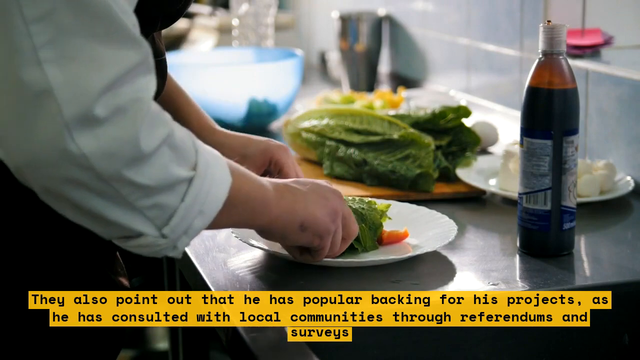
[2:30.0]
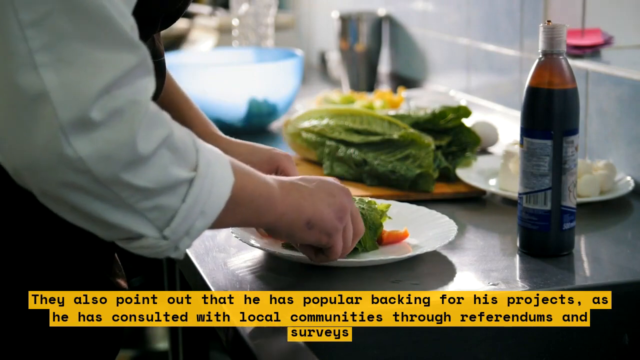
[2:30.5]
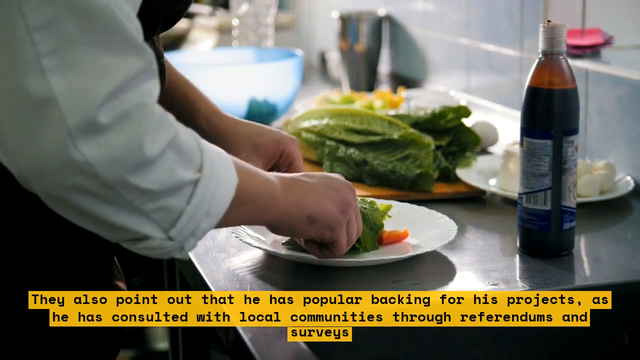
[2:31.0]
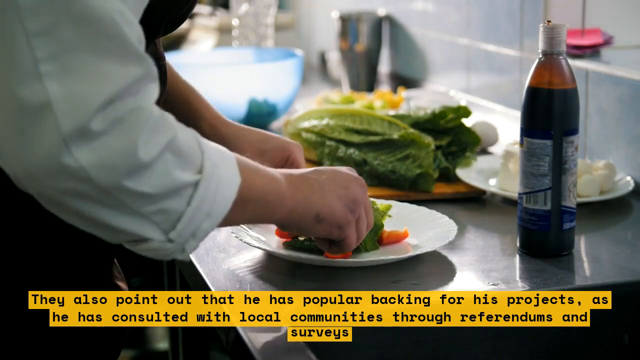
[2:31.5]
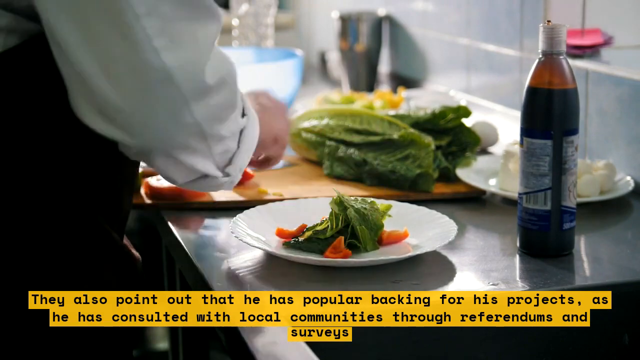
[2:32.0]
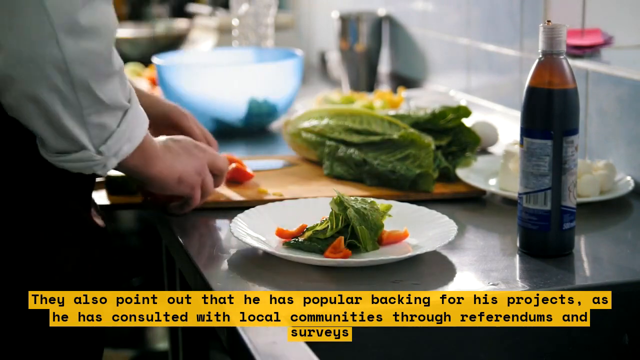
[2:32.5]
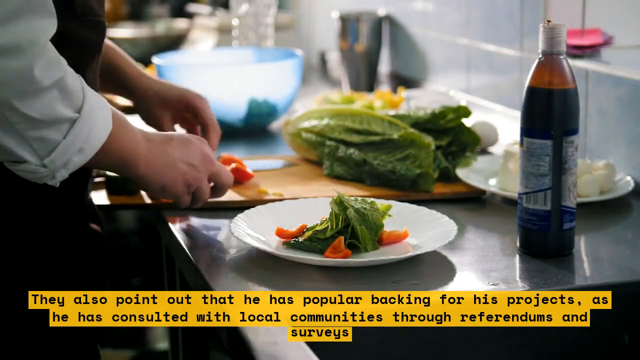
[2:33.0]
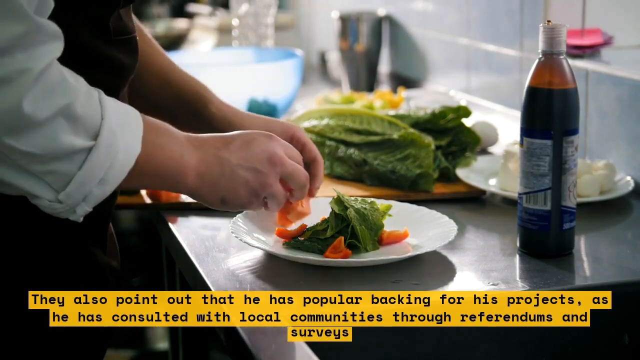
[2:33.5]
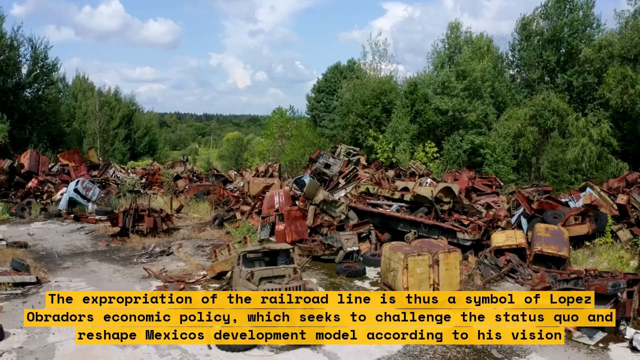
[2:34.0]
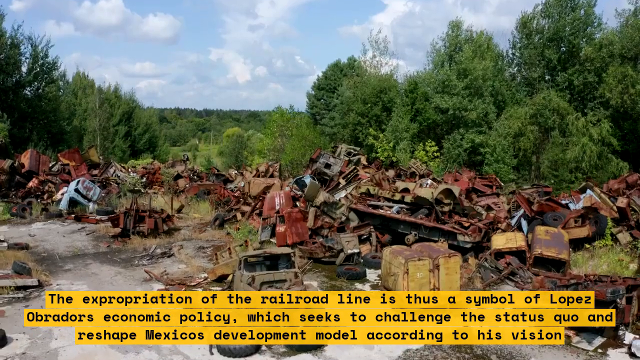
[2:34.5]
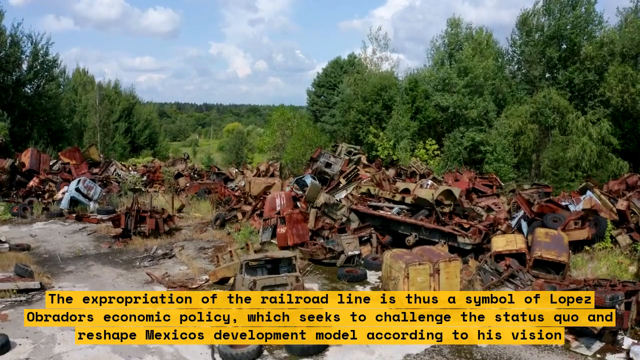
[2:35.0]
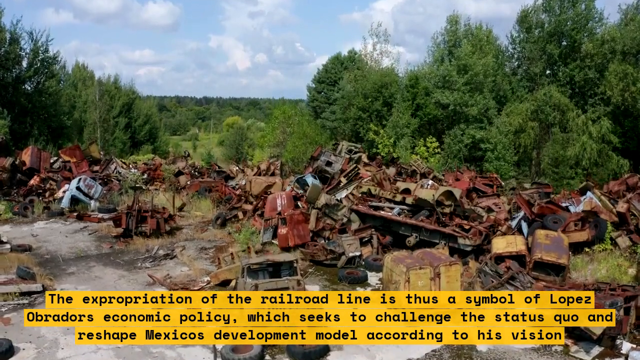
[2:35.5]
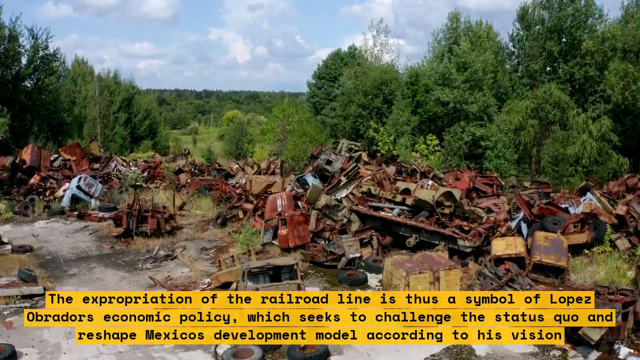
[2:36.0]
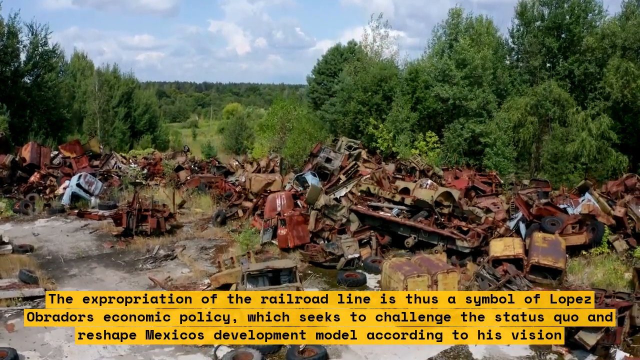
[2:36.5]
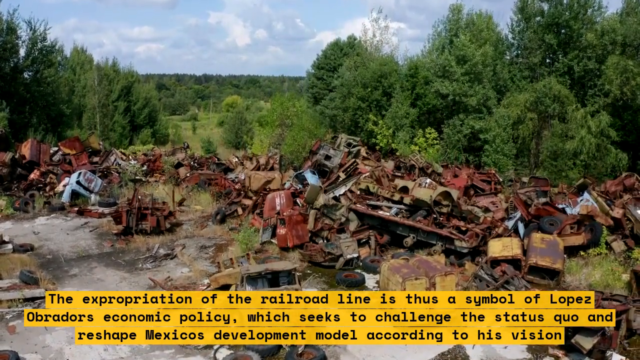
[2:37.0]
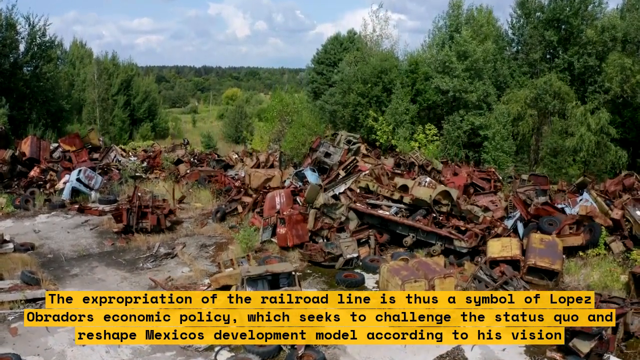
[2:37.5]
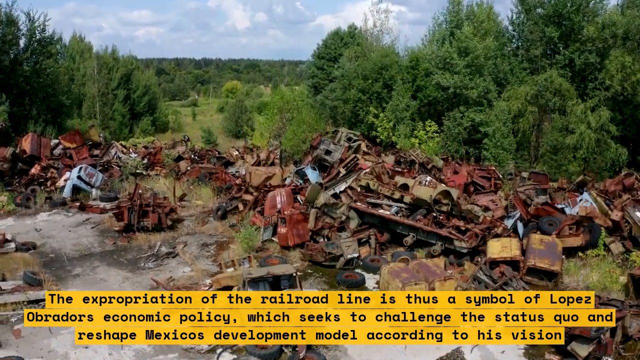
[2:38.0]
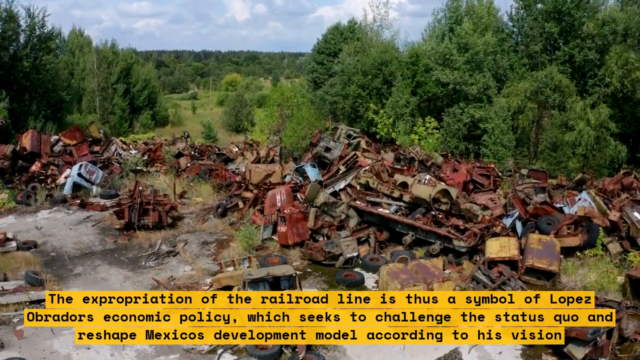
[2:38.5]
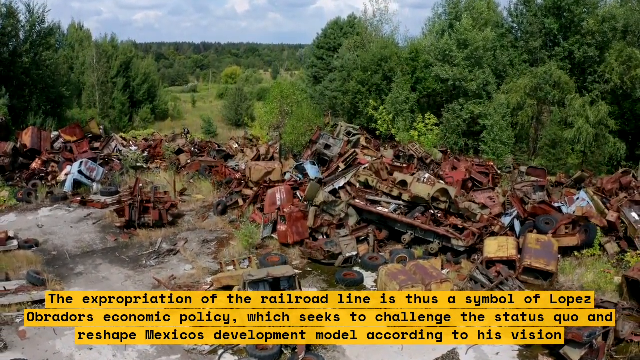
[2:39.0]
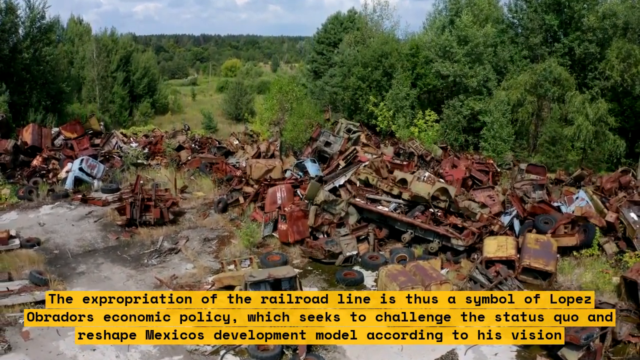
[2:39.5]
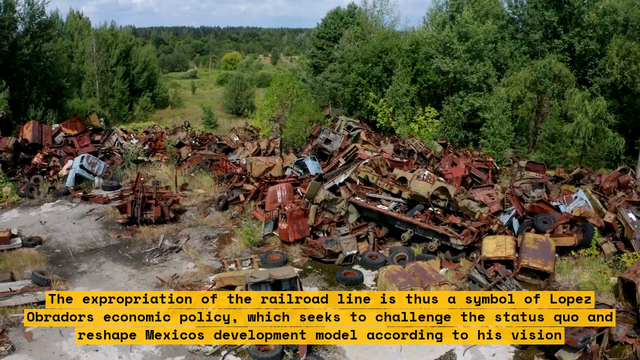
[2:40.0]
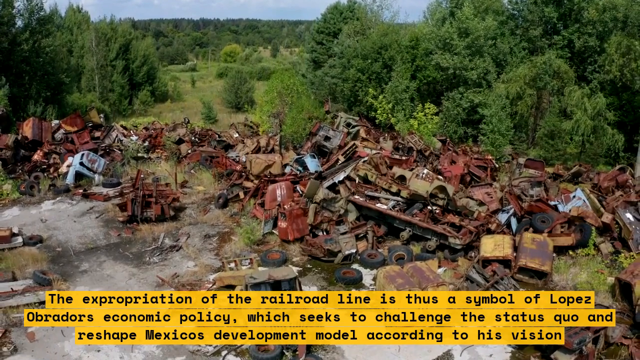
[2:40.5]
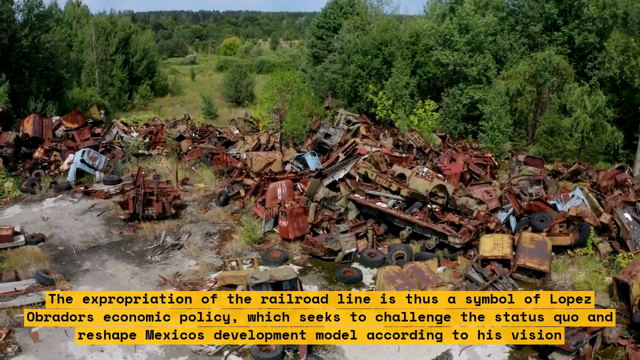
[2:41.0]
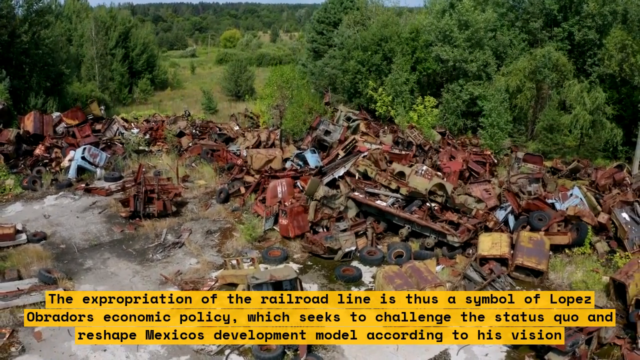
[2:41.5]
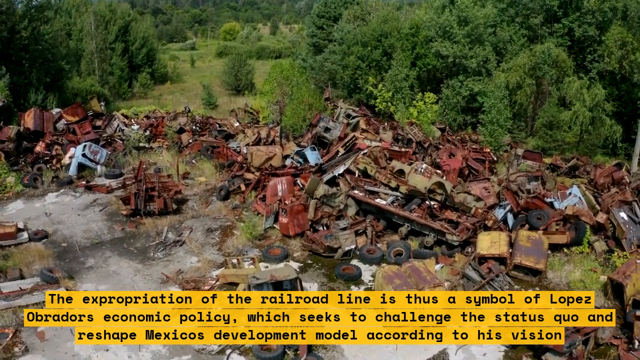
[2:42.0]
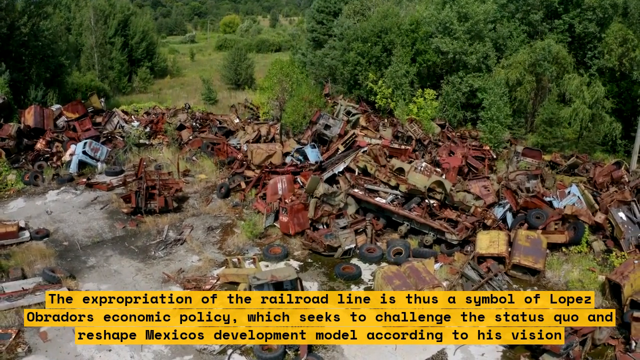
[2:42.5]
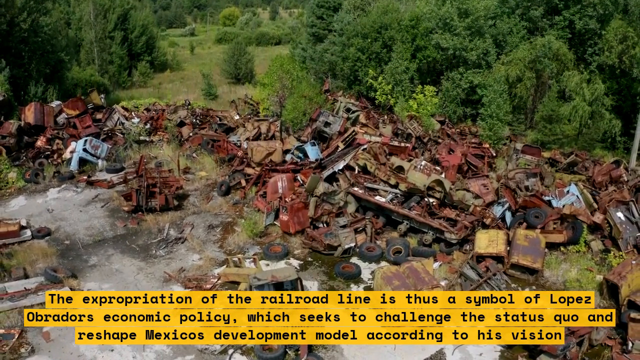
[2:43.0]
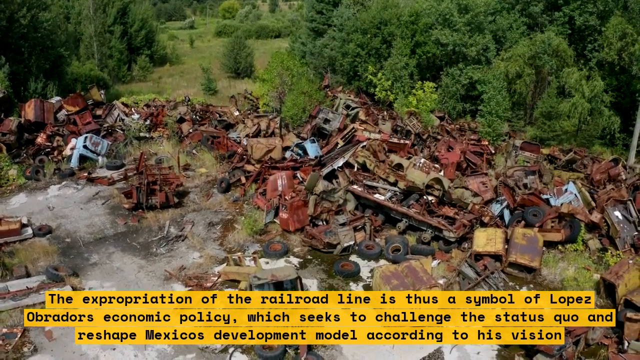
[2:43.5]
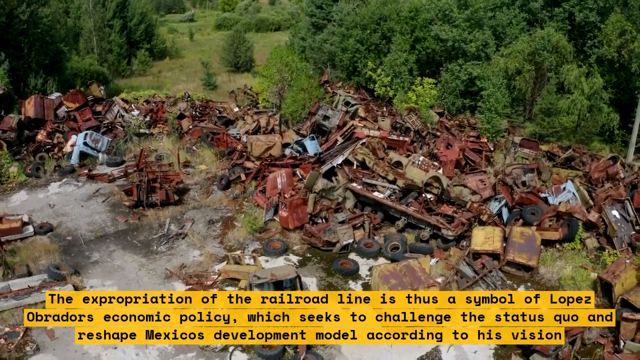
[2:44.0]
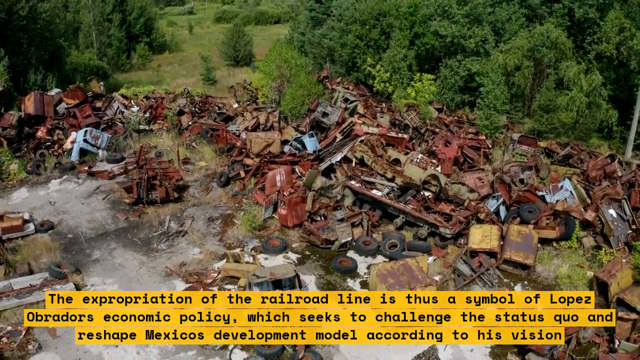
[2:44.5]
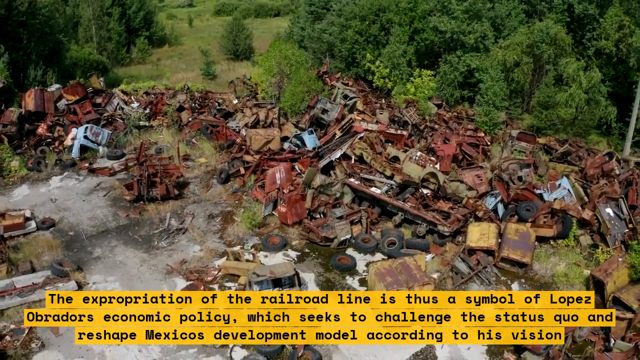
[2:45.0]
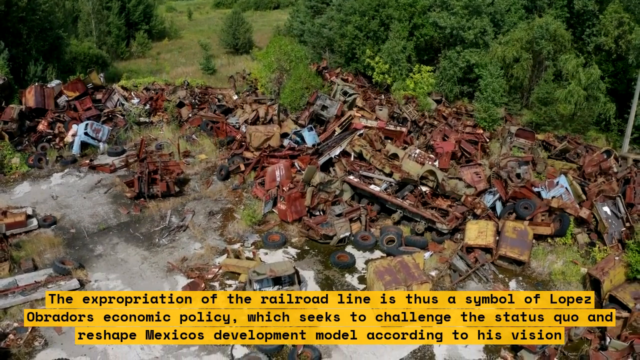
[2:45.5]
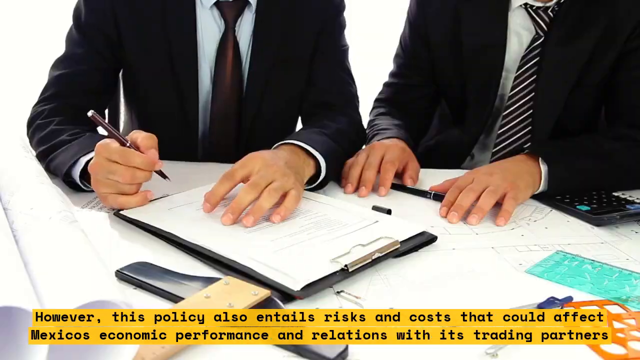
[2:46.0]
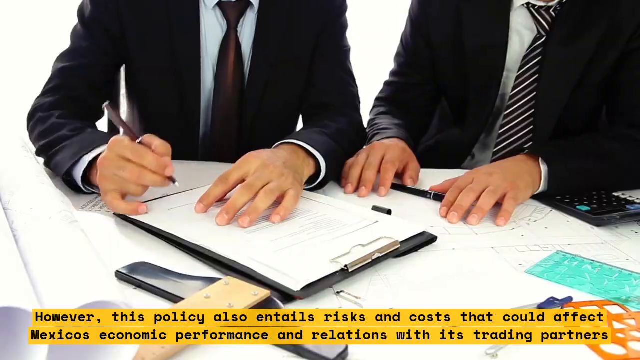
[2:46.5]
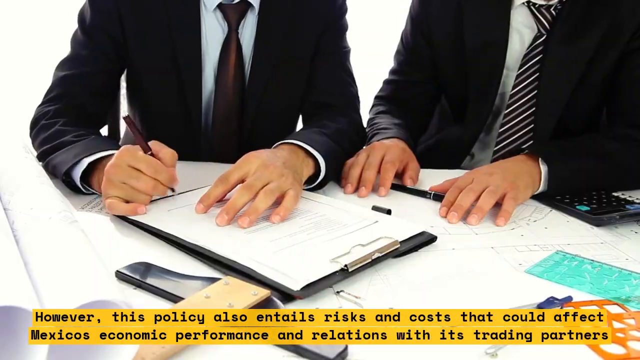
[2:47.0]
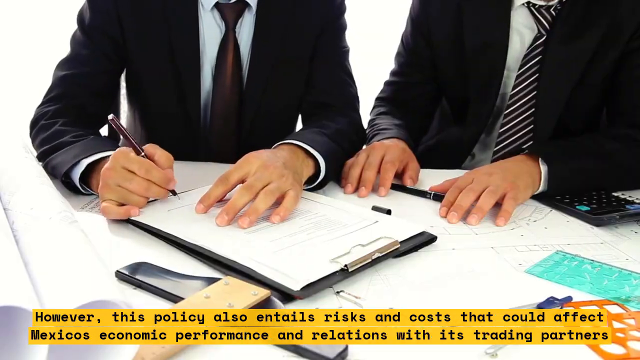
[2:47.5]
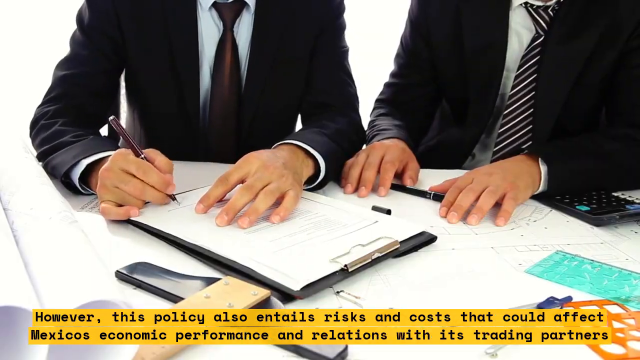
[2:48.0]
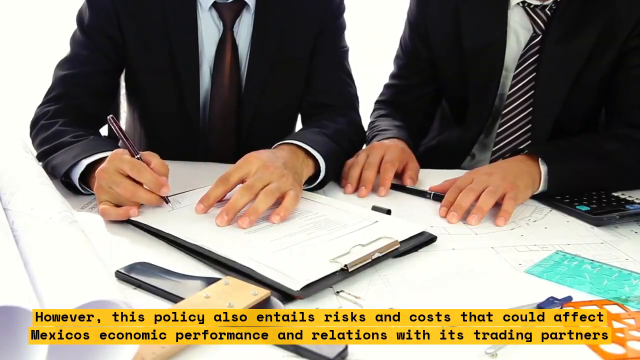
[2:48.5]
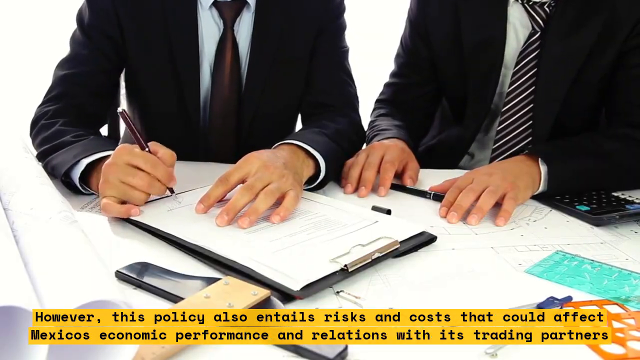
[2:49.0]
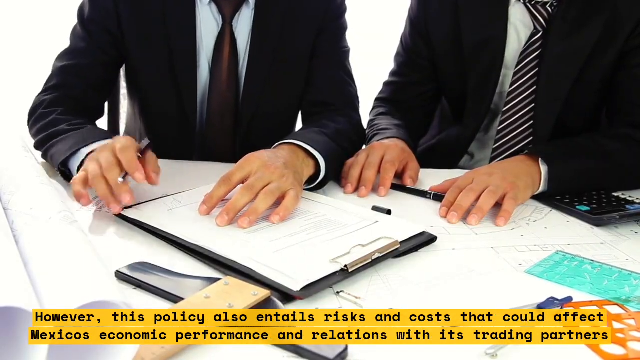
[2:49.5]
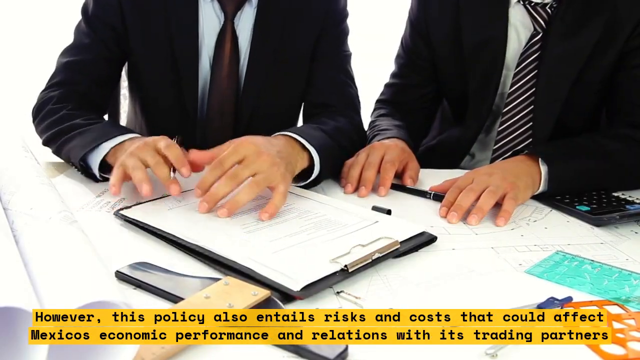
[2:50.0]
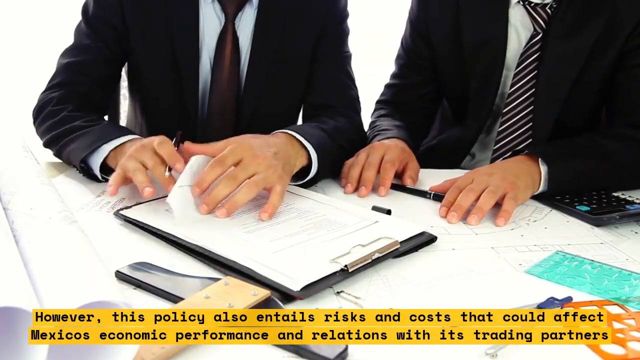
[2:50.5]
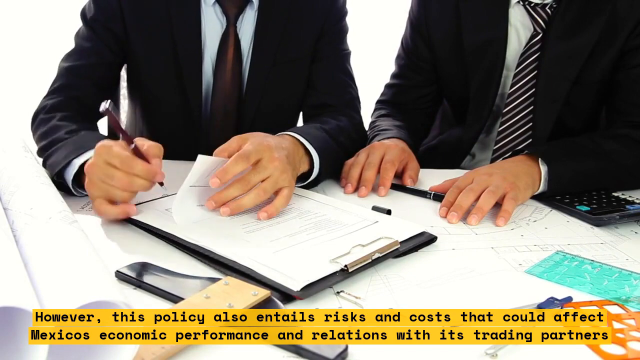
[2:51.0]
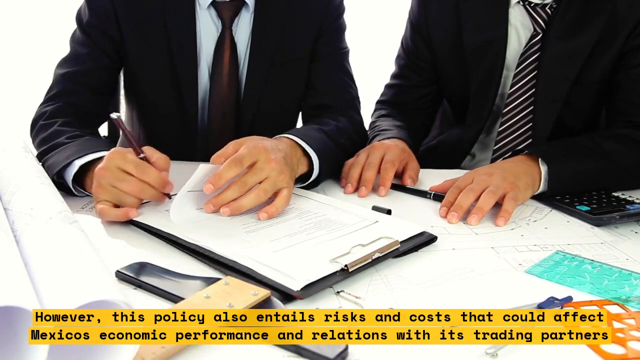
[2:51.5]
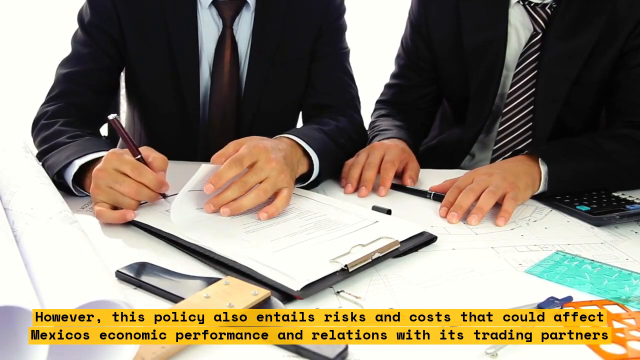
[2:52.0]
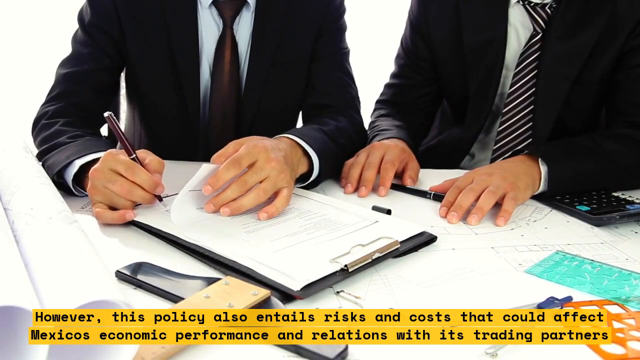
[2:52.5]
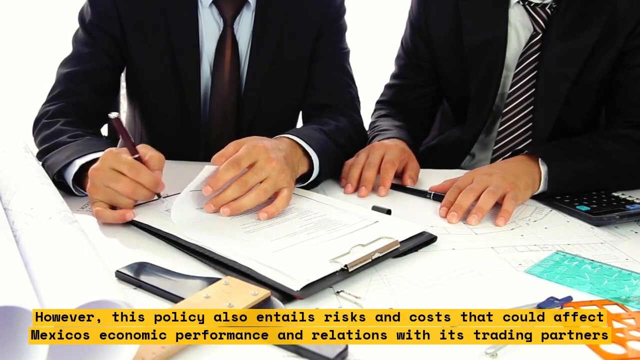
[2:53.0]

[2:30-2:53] The man is still preparing the salad, putting lettuce and tomatoes on what appears to be a white plate, with text below him about his popular backing and consultation with local communities through referendums and surveys. The scene then changes to an area that looks like a construction site or a place with old car or truck parts, possibly a junkyard, apparently in the middle of a green area where it looks like things were just dumped. There are a lot of red truck parts and old tires. Text reads: "however, this policy also entails risks and costs that could affect Mexico's economic performance." Two men wearing suits have paperwork and sign it, flipping through pages and signing.